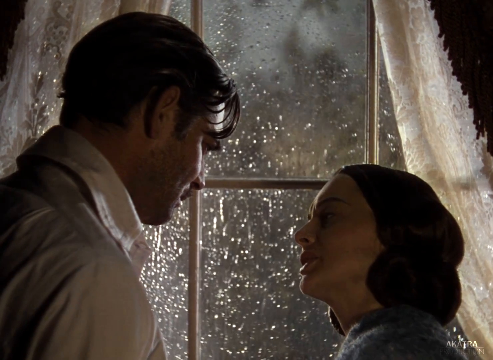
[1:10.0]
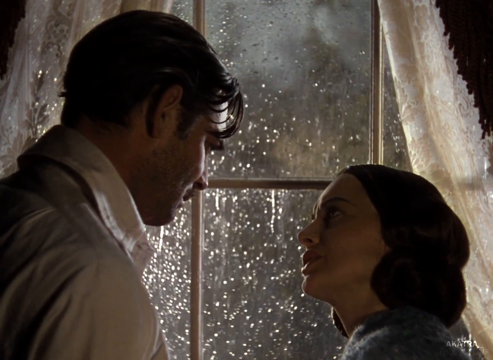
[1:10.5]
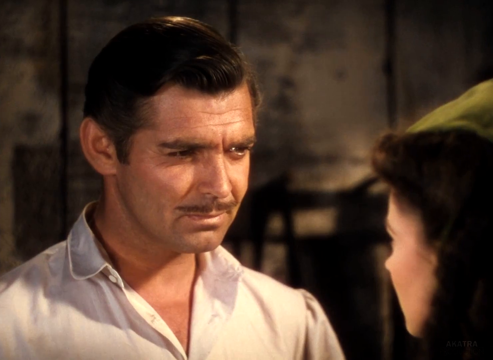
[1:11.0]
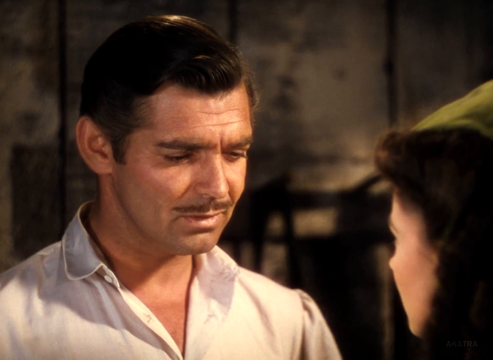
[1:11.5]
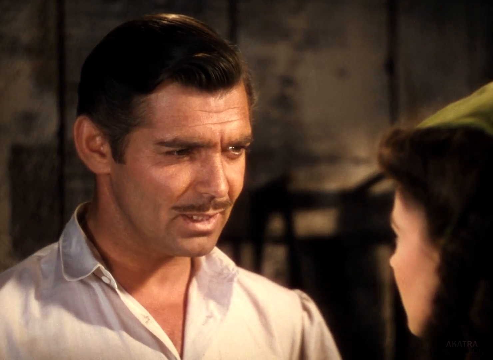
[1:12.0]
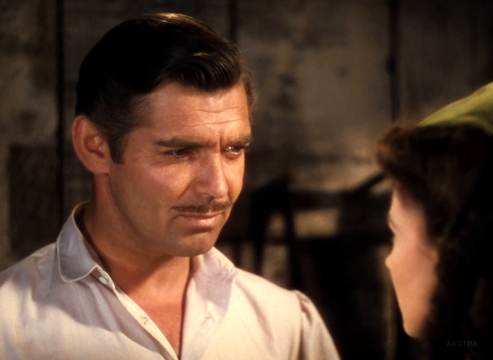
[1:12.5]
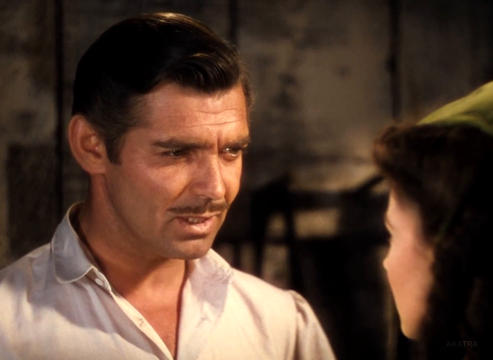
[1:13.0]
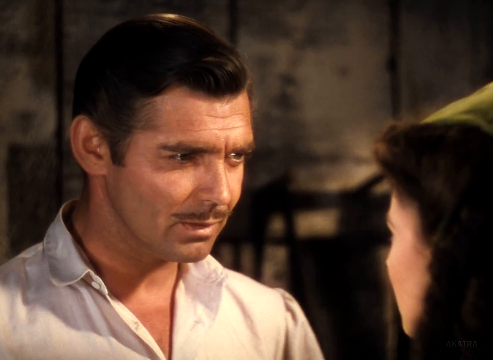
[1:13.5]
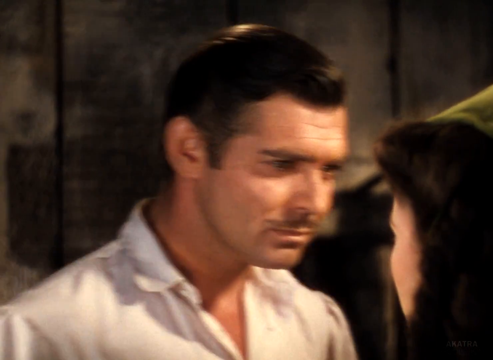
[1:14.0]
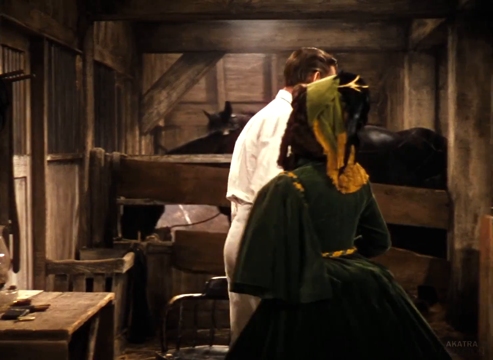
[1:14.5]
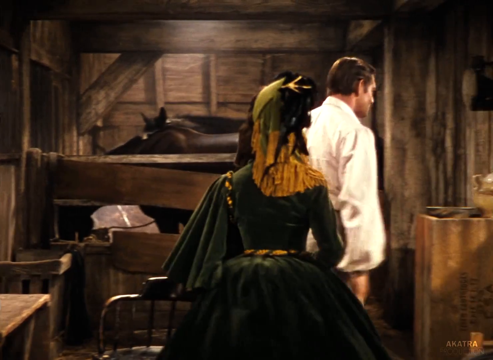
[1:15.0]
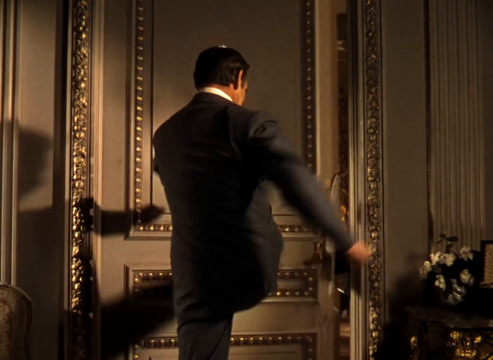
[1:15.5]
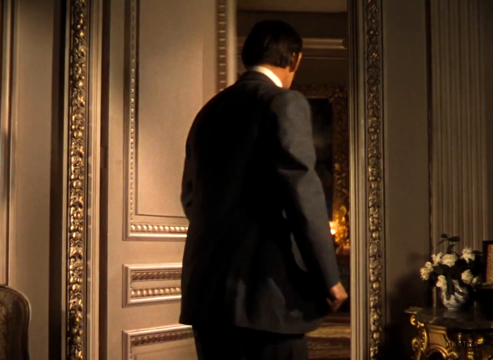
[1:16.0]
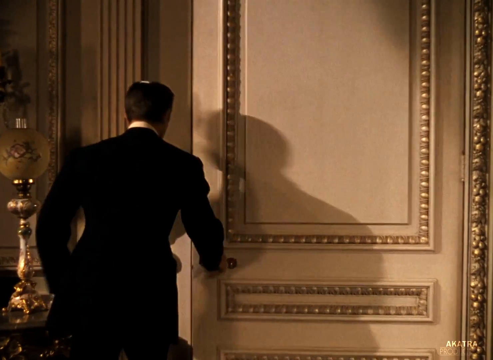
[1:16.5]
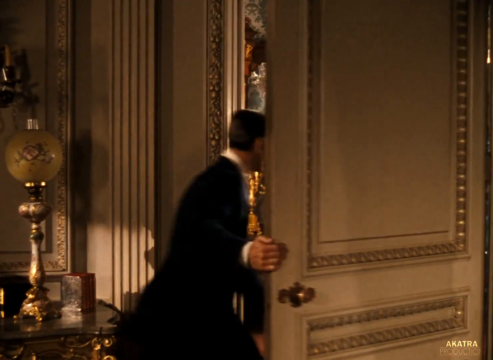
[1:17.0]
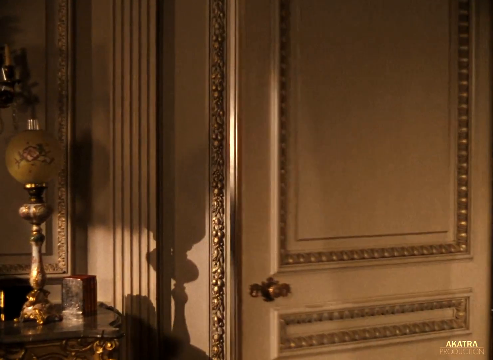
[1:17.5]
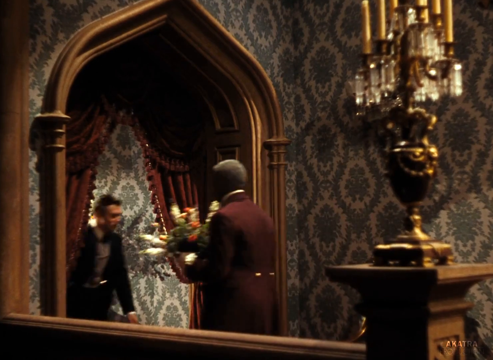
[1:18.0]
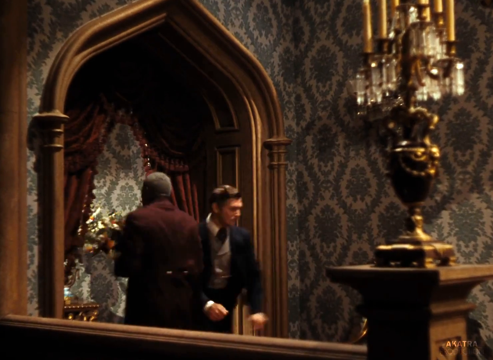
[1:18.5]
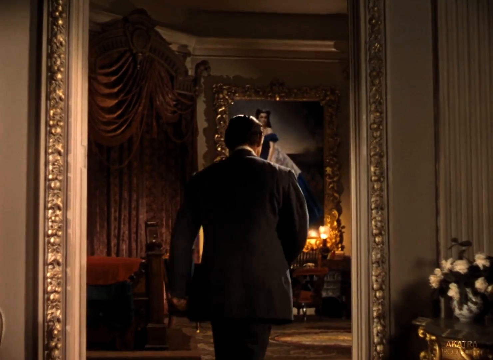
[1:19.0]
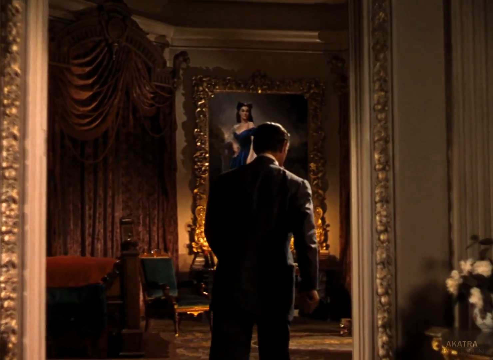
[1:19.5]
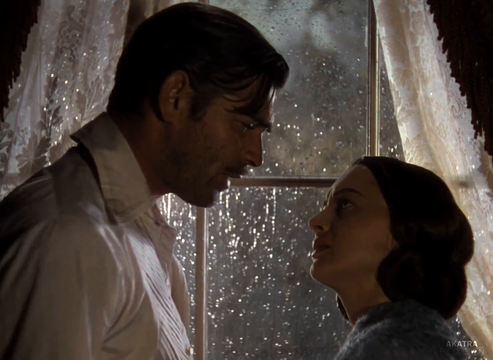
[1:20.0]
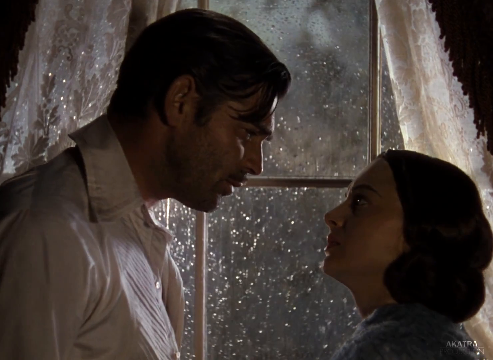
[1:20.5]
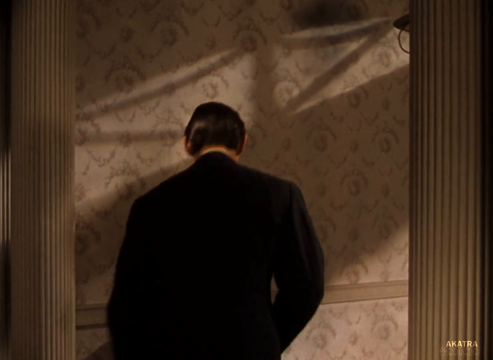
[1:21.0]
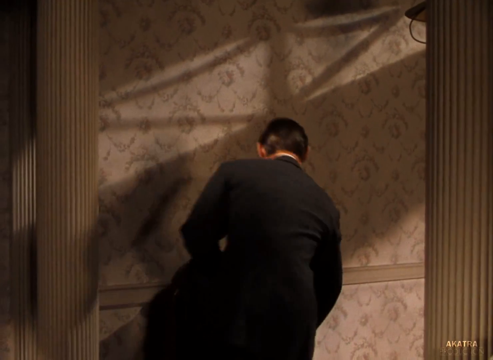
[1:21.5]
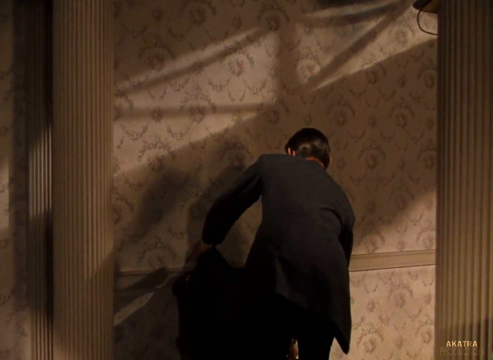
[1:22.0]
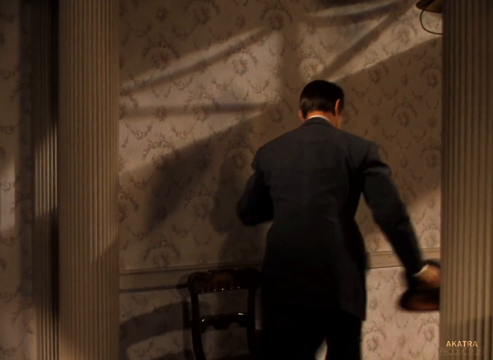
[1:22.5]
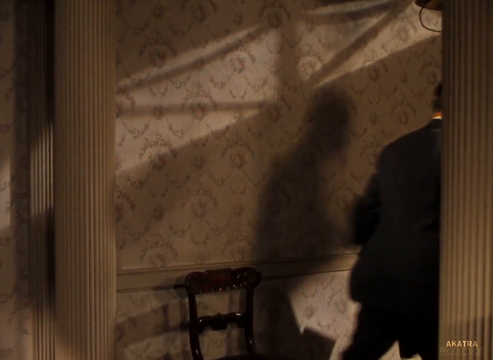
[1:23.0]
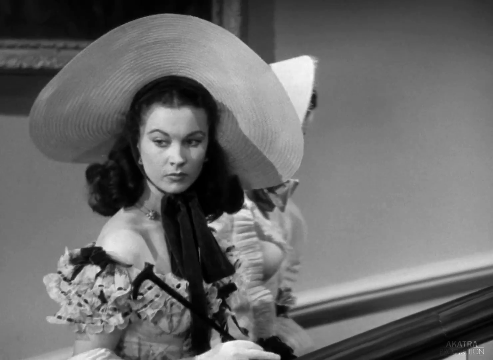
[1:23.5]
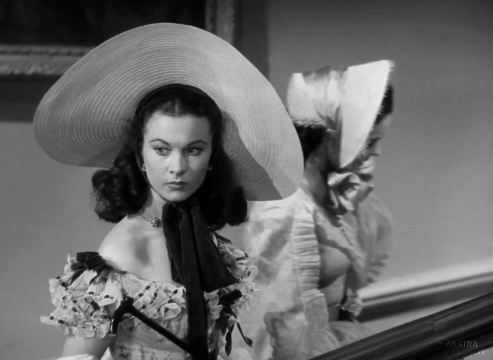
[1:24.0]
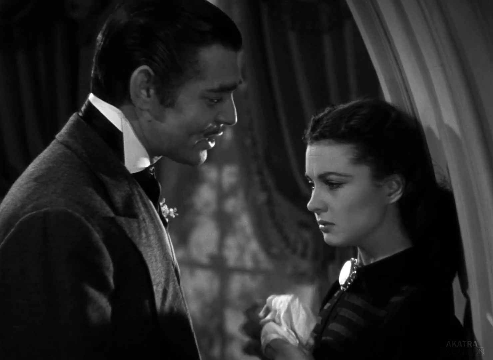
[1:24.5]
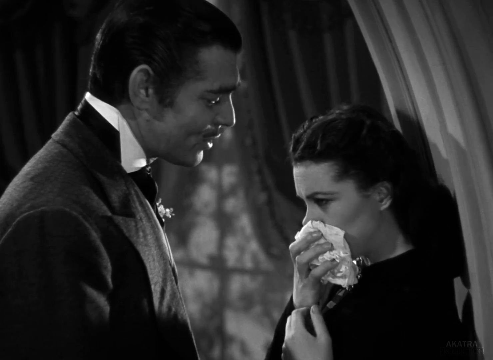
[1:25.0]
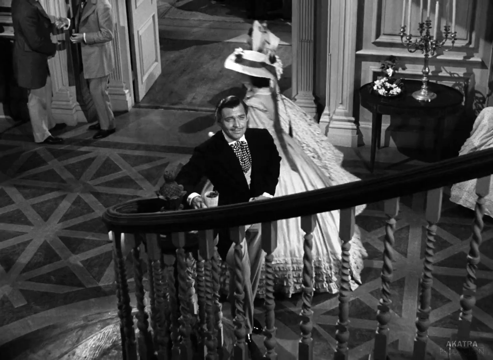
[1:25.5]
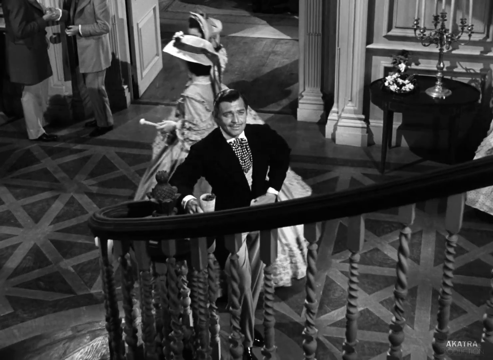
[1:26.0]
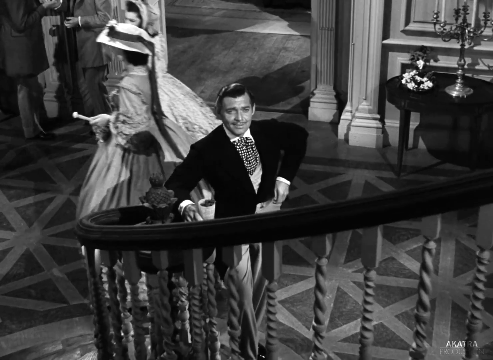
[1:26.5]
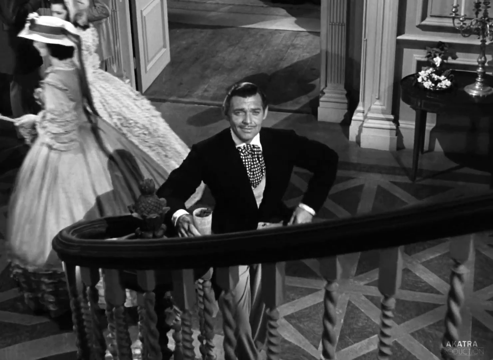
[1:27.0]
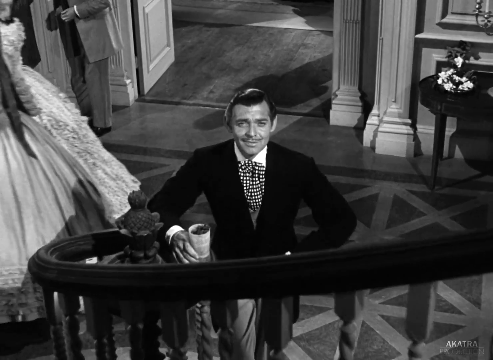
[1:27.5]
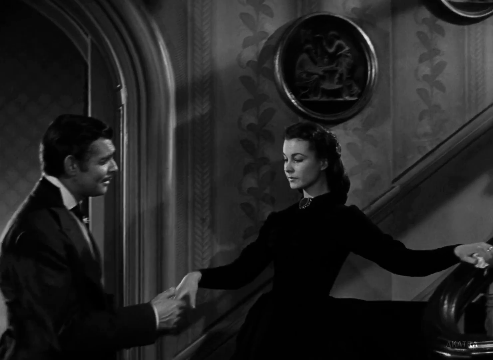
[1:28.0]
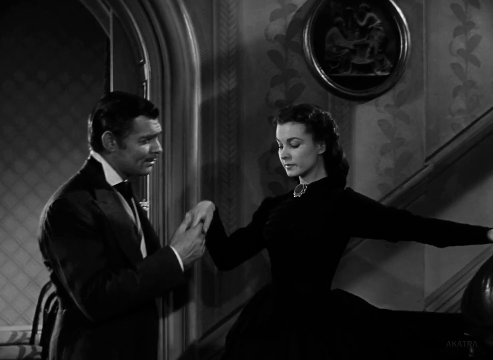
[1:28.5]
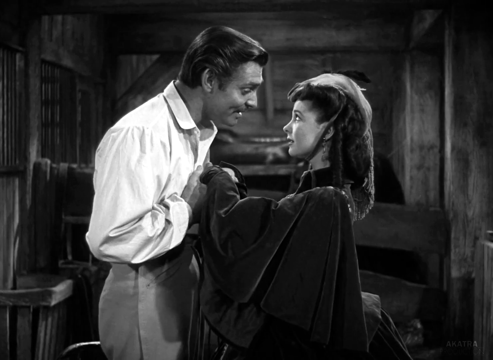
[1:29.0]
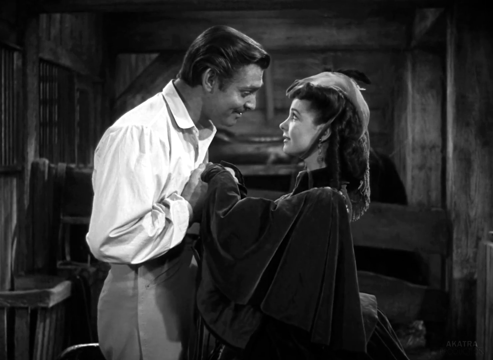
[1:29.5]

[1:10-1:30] The couple continues to interact romantically. The man kicks down a door and walks through a big mansion. The lady, who looks like she is probably royalty, walks elegantly down the stairs, and the man takes her right hand and kisses it. The footage transitions between color and black and white in several parts.